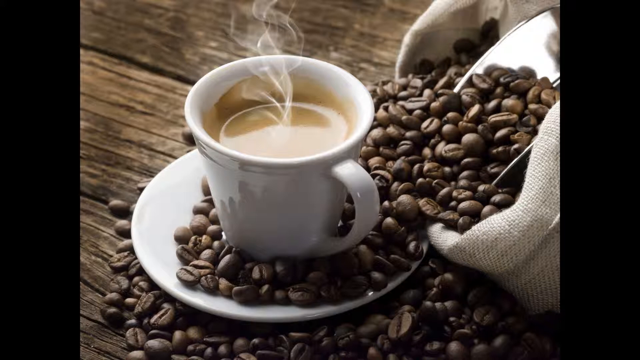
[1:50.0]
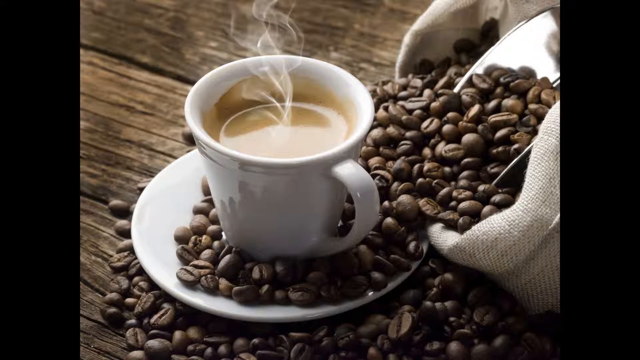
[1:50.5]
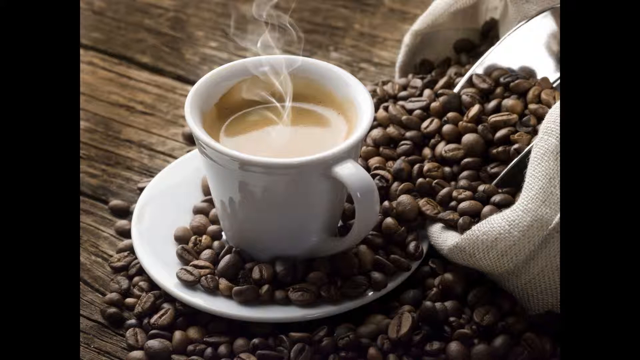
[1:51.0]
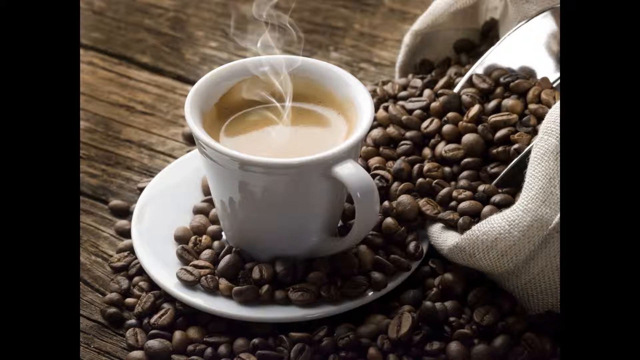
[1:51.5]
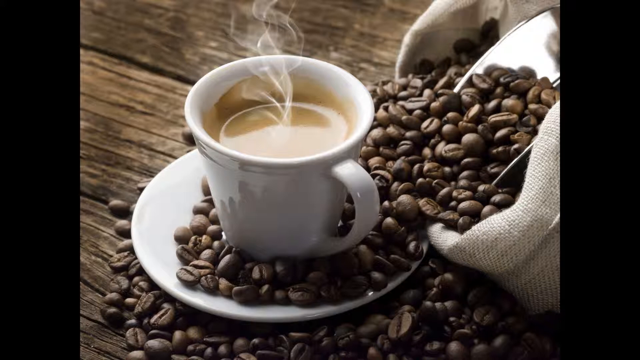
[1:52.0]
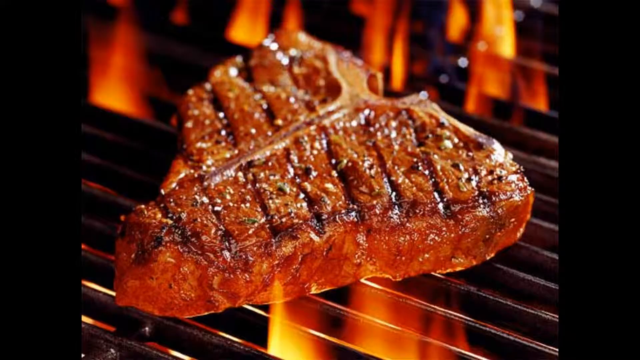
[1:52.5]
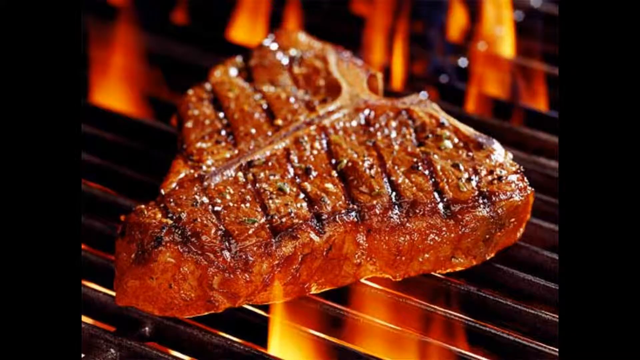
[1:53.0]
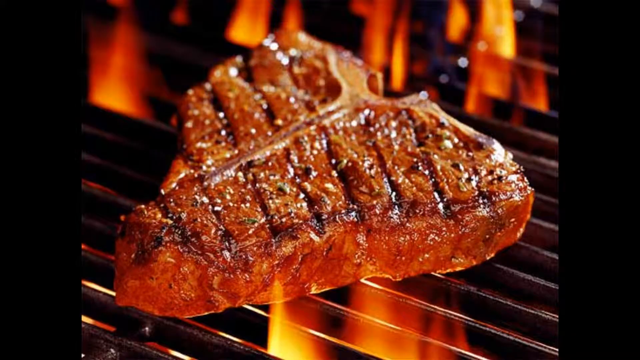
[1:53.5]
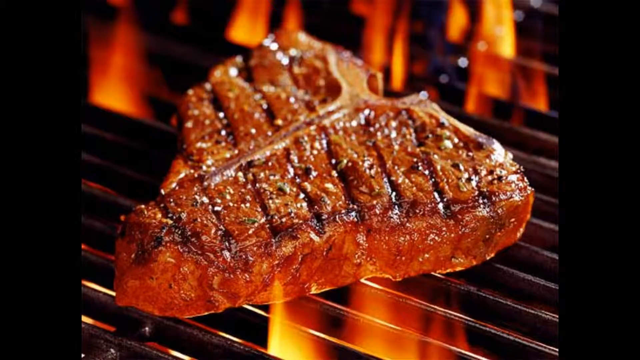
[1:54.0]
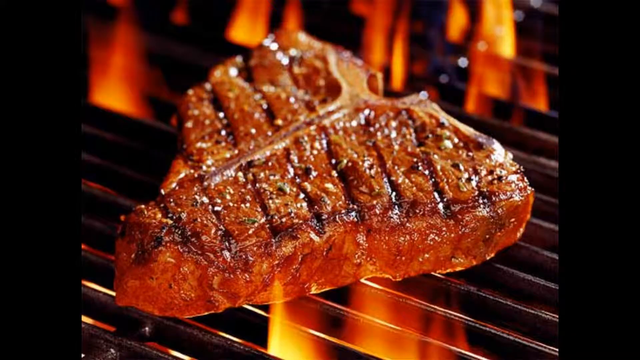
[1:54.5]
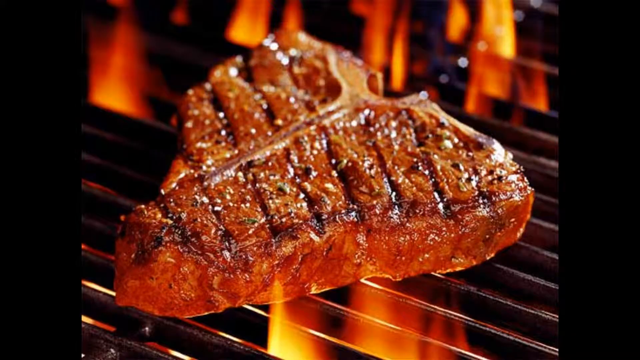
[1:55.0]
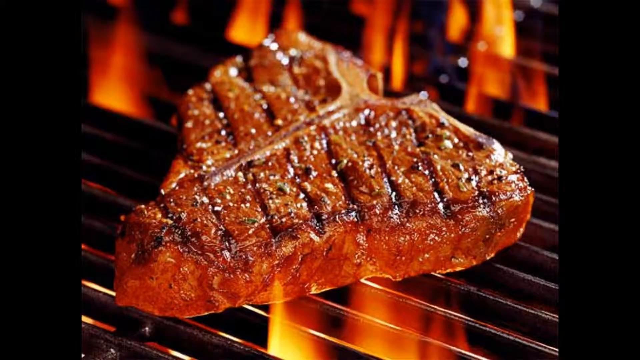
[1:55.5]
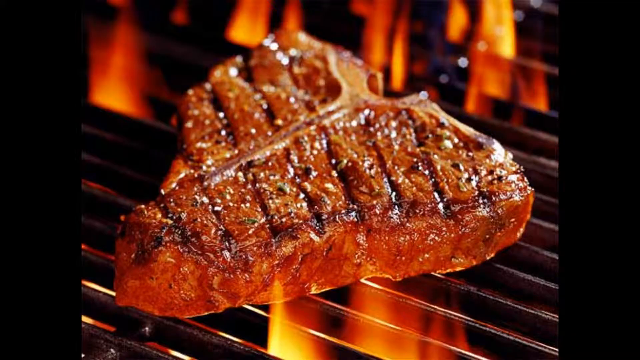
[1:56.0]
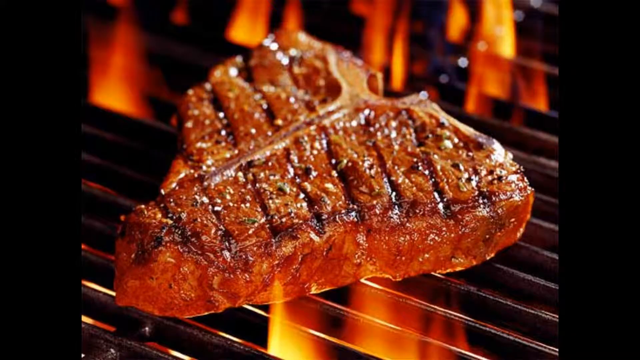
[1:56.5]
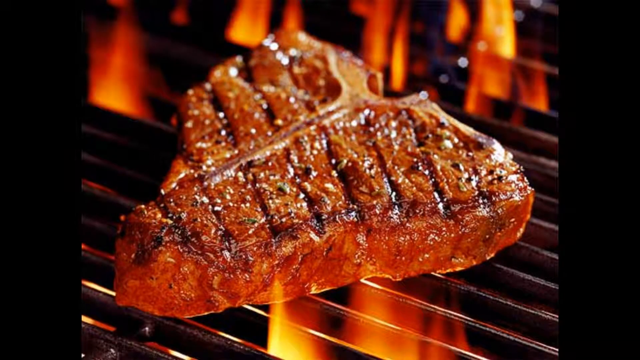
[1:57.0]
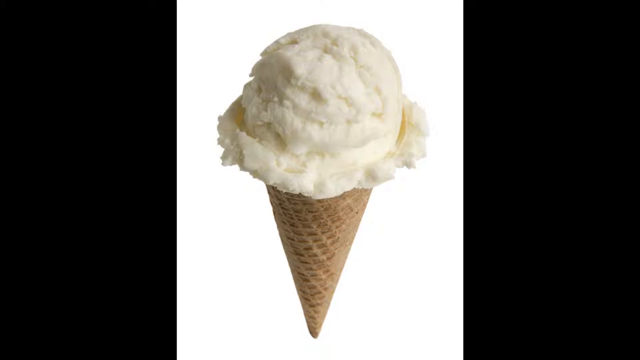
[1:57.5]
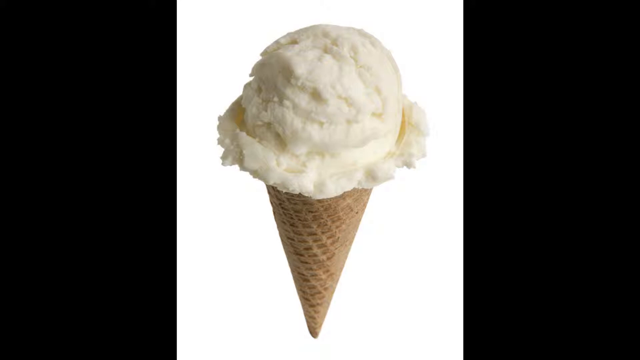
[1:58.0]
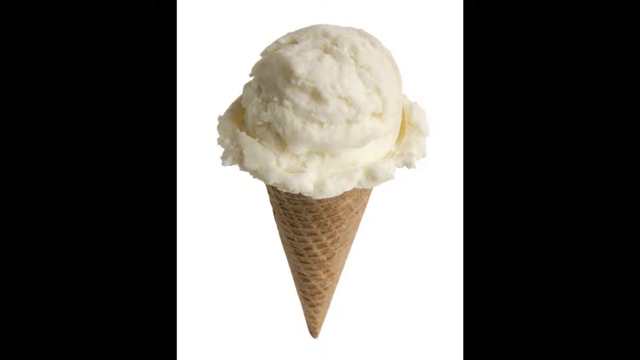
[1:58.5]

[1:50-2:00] The photo of the coffee cup returns, steam coming out of it, sitting on a saucer surrounded by coffee beans, and then sitting on a wooden floor. A picture of a T-bone steak being grilled follows, with flames coming up between the sections of the grill. Then an ice cream cone appears again, and the video goes back to the coffee.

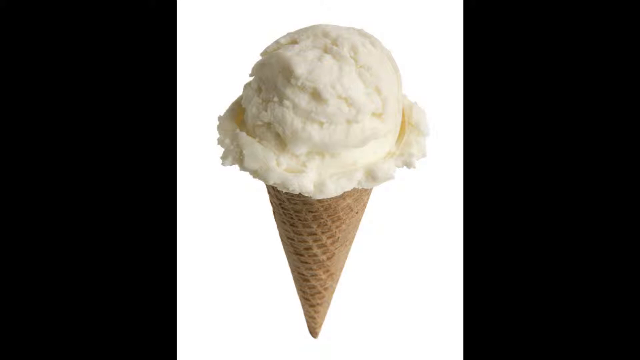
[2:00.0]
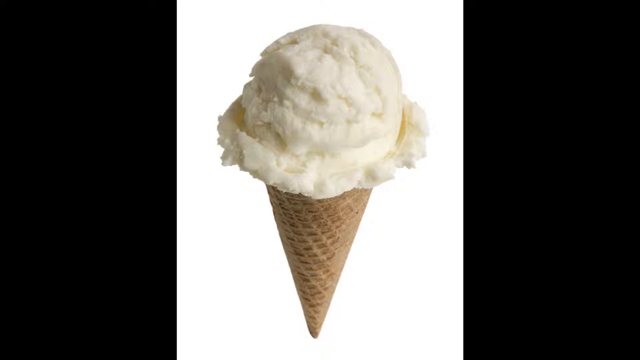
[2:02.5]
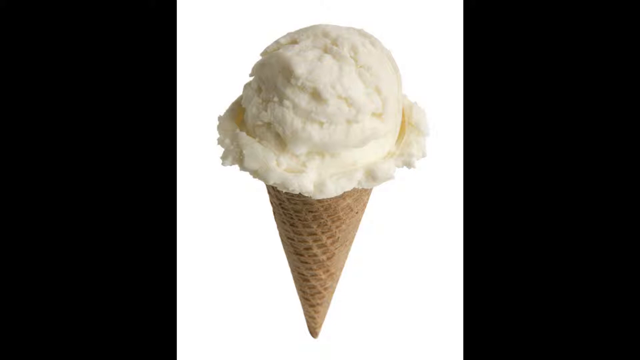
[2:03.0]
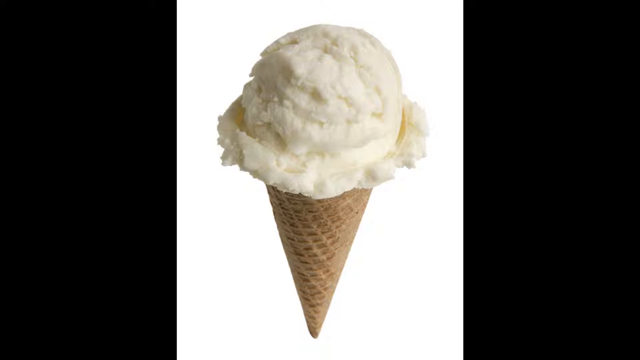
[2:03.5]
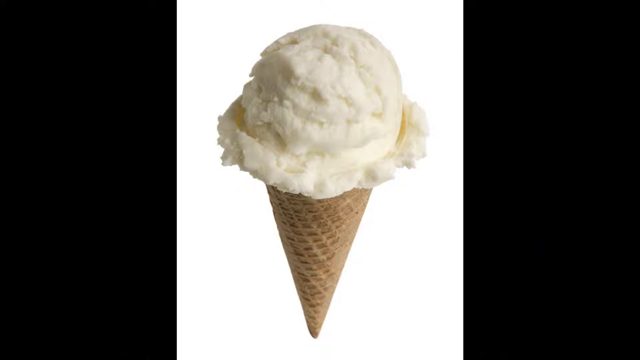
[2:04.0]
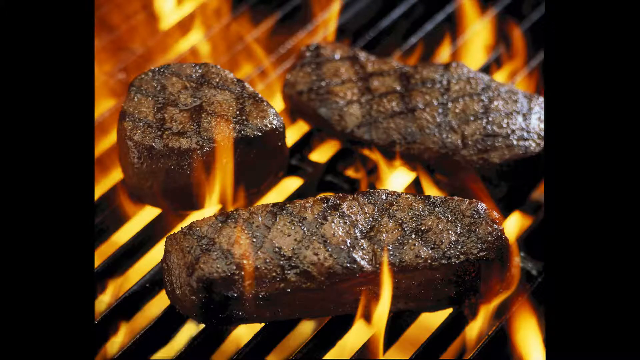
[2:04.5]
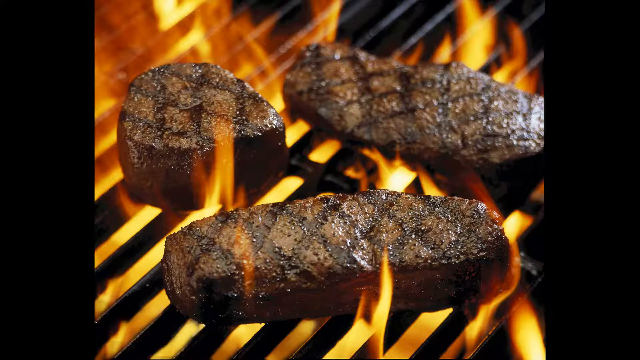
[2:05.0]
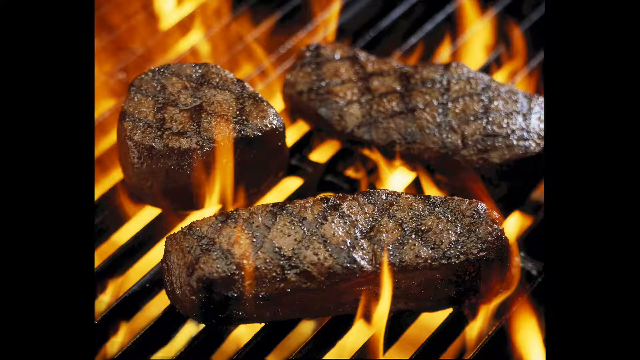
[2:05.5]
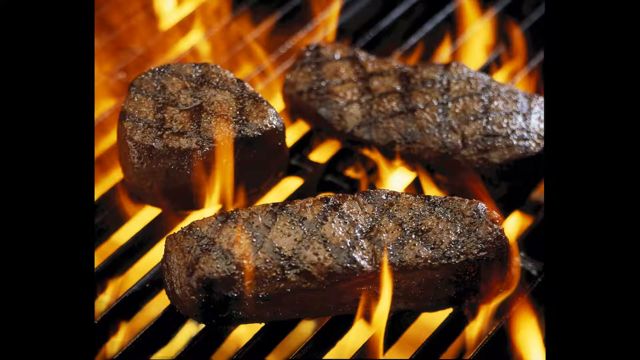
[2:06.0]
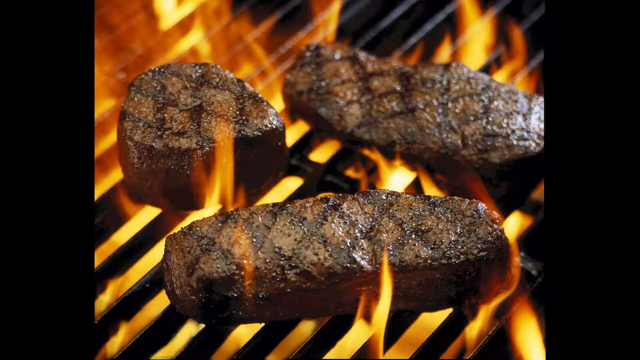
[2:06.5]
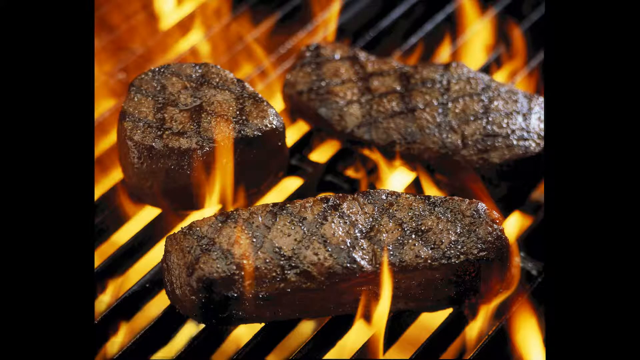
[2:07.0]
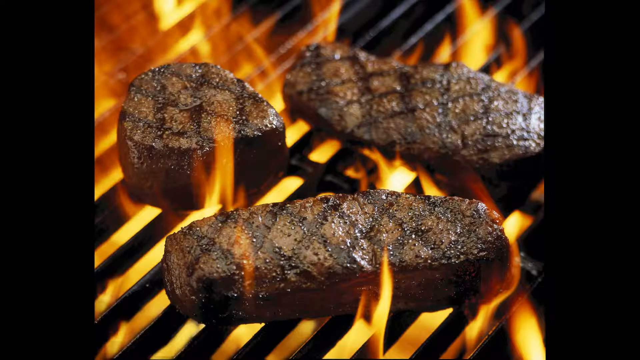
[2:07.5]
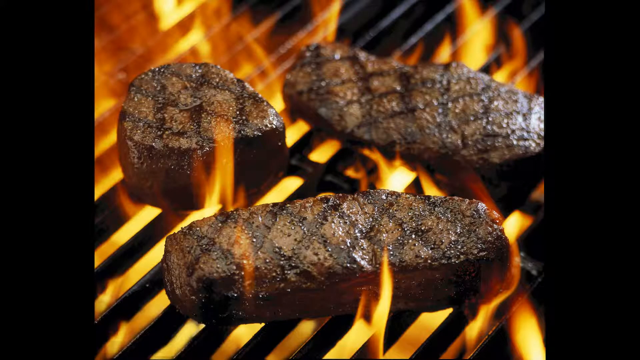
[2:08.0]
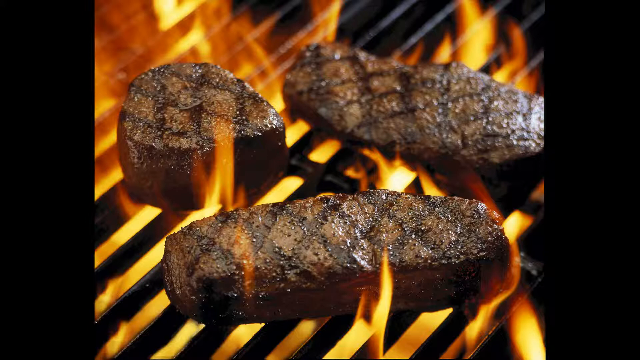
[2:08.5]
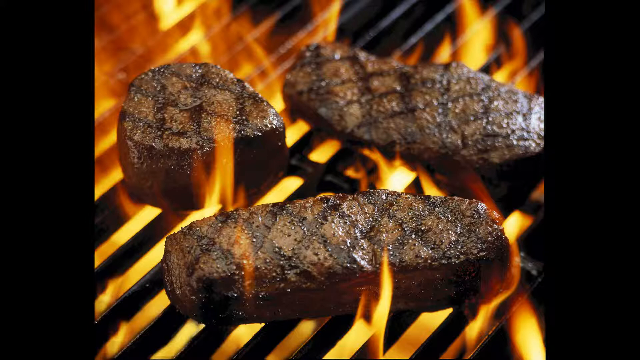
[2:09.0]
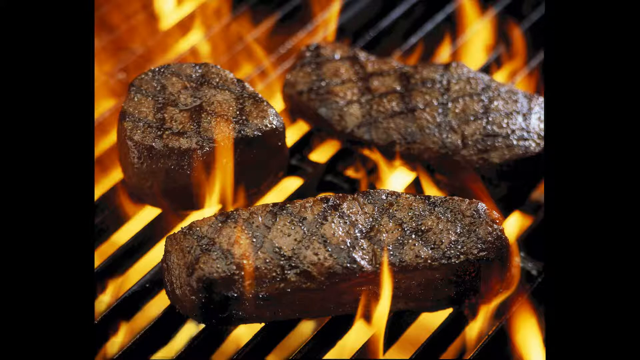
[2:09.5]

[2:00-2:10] A picture shows a vanilla ice cream in a waffle cone. Next, several sirloin steaks and a filet mignon are on a grill, with flames scorching them and leaving grill marks. The video then returns to the picture of the ice cream cone.